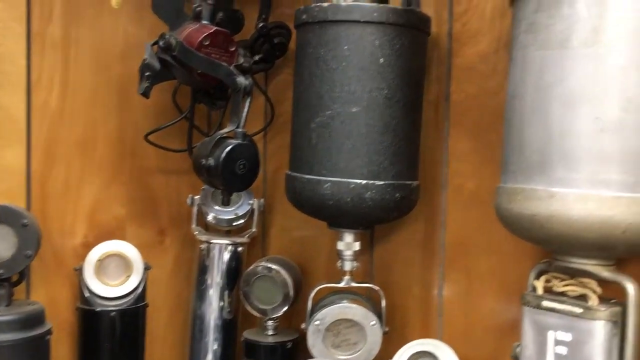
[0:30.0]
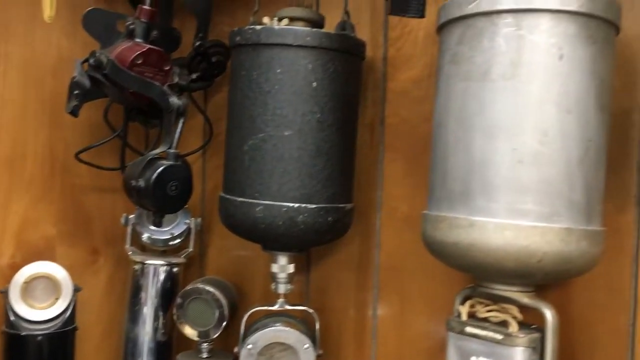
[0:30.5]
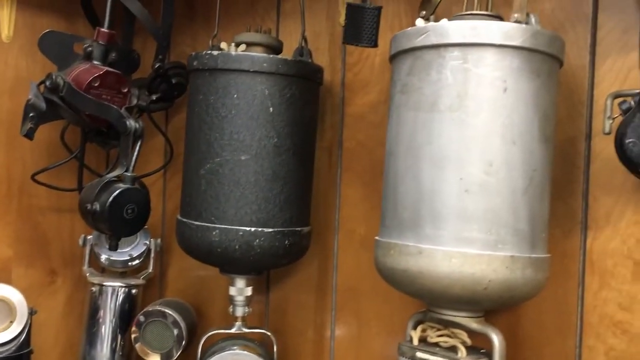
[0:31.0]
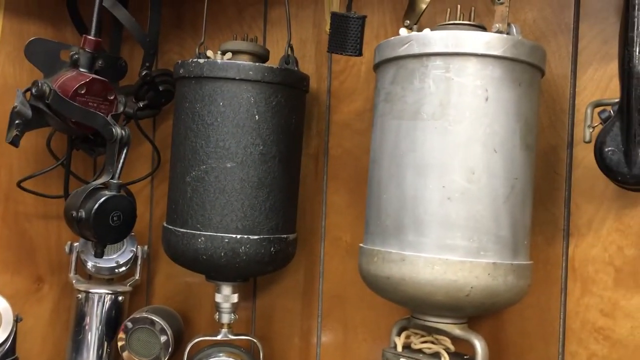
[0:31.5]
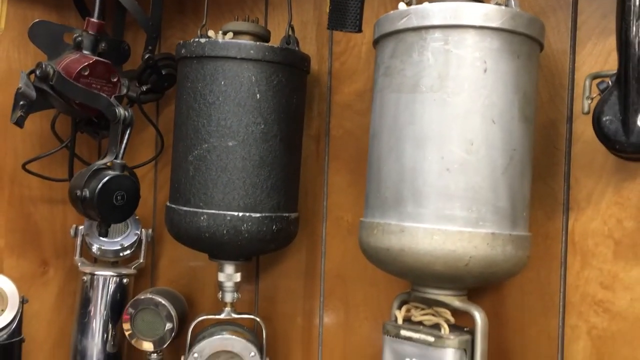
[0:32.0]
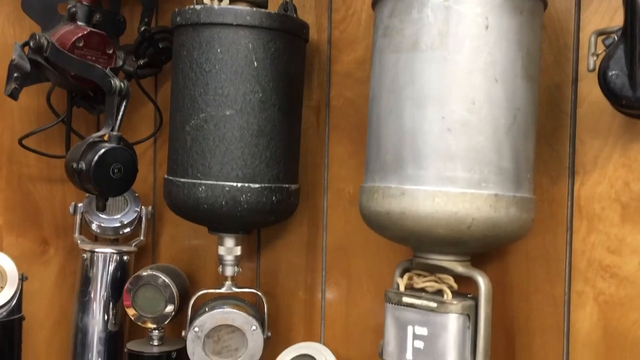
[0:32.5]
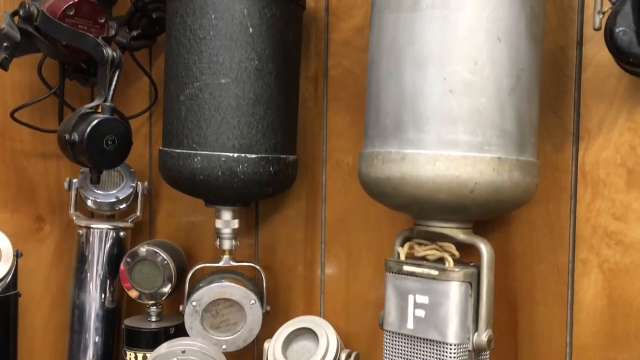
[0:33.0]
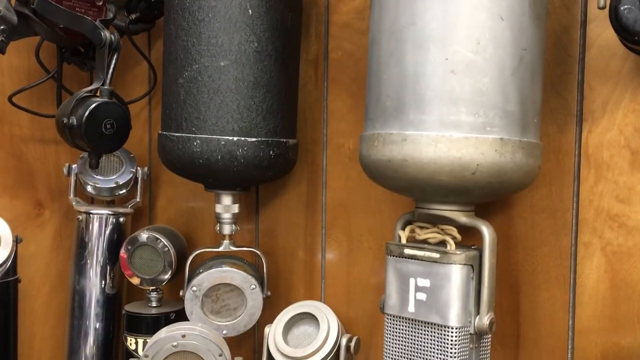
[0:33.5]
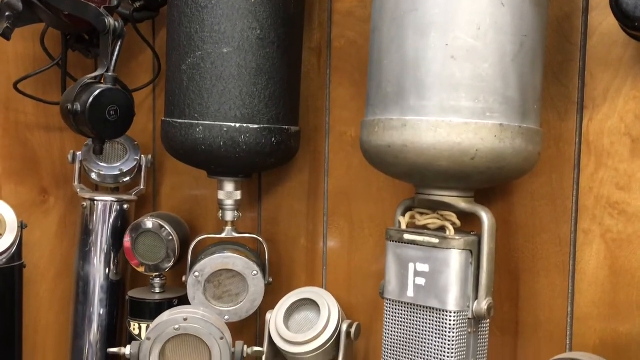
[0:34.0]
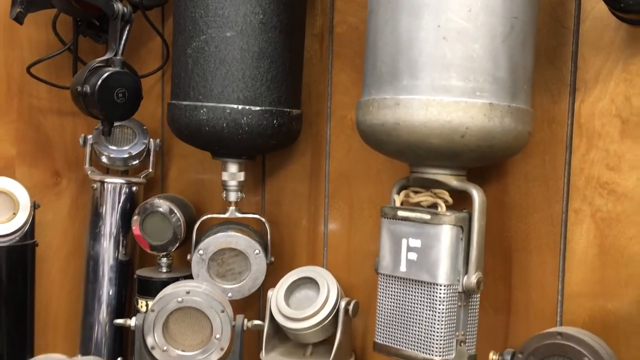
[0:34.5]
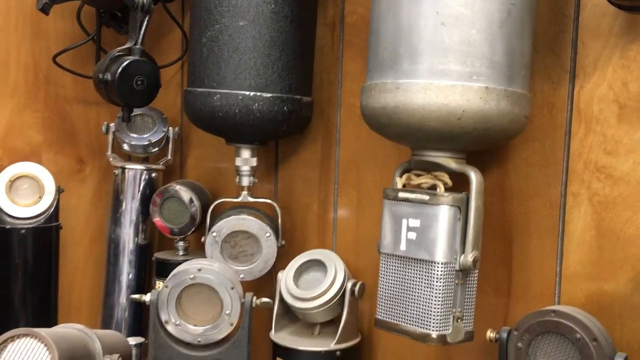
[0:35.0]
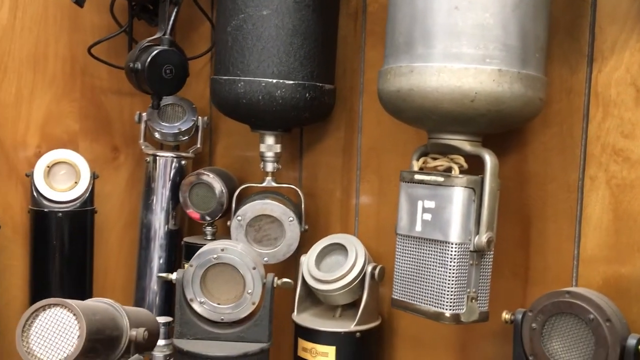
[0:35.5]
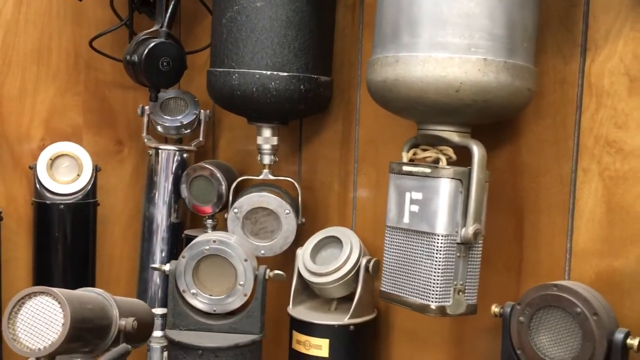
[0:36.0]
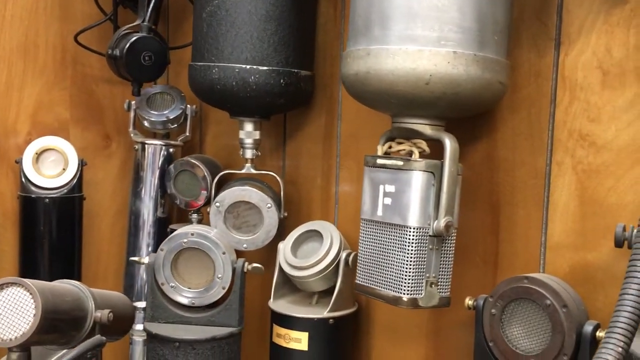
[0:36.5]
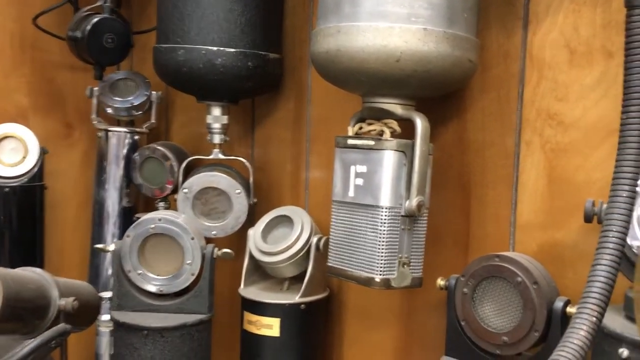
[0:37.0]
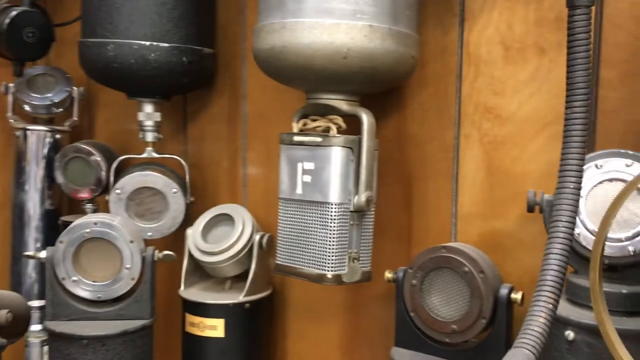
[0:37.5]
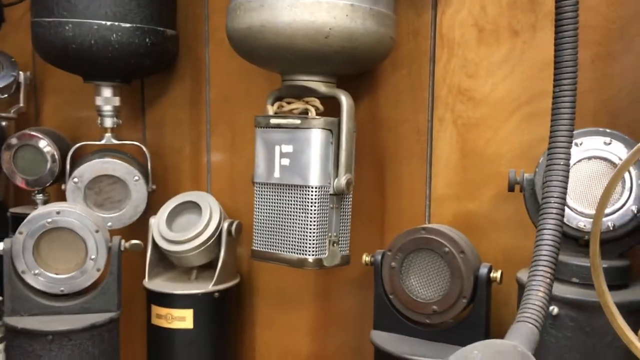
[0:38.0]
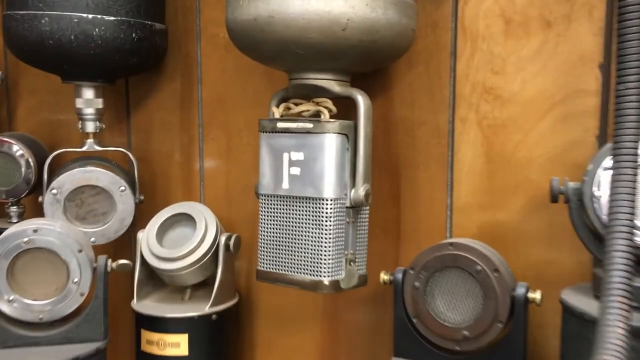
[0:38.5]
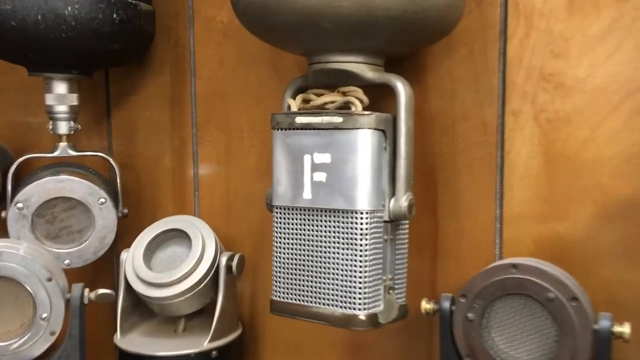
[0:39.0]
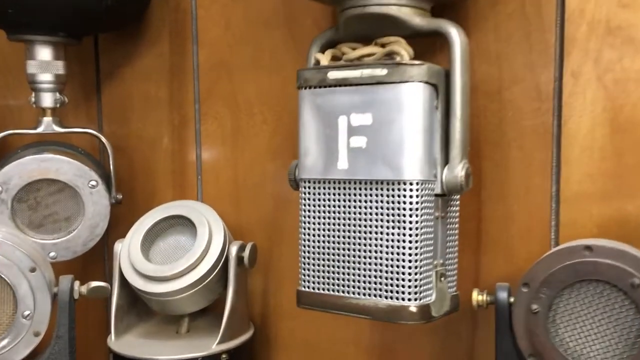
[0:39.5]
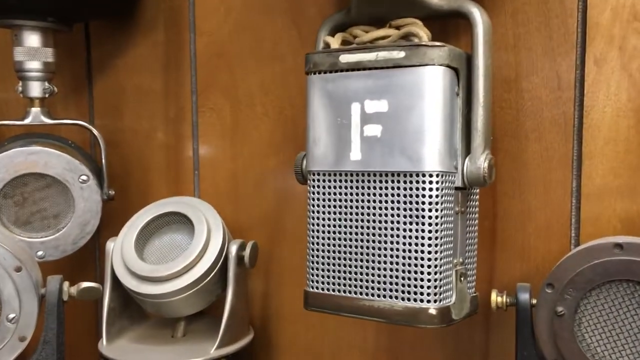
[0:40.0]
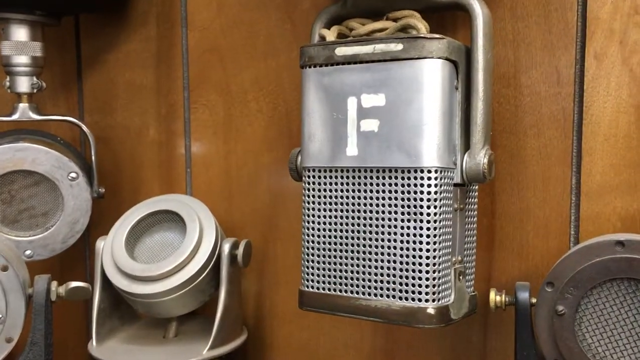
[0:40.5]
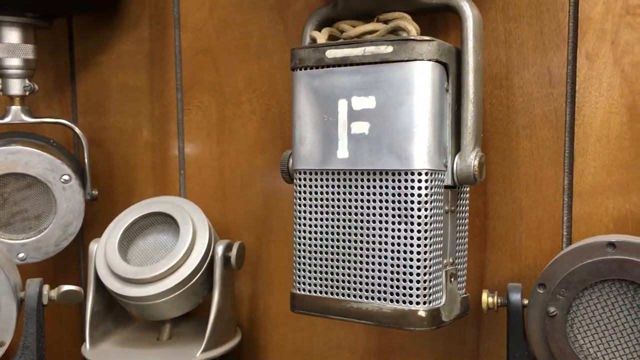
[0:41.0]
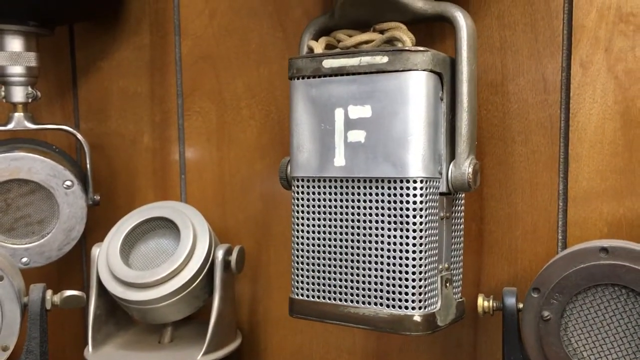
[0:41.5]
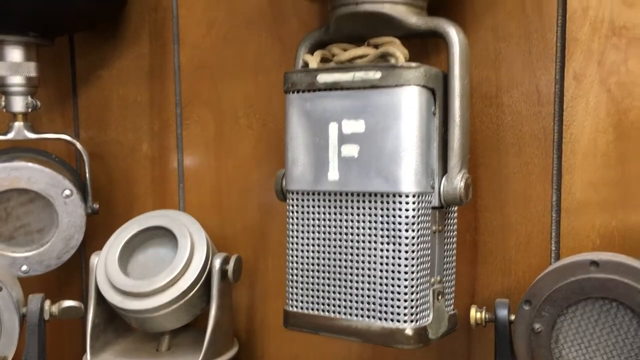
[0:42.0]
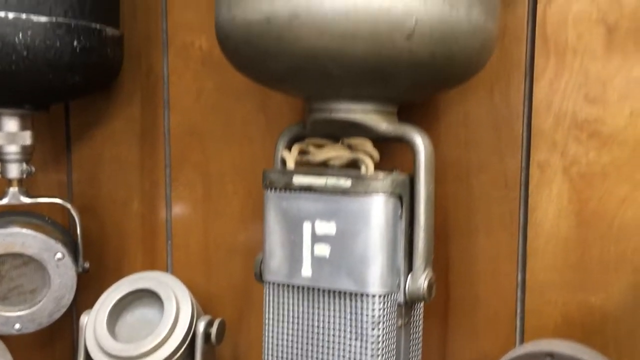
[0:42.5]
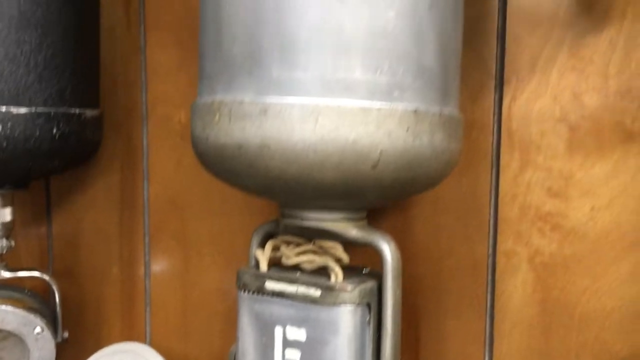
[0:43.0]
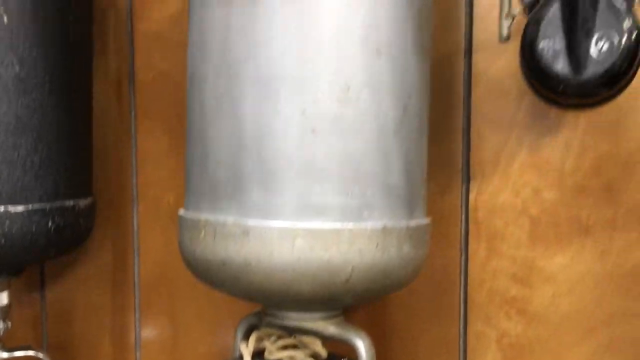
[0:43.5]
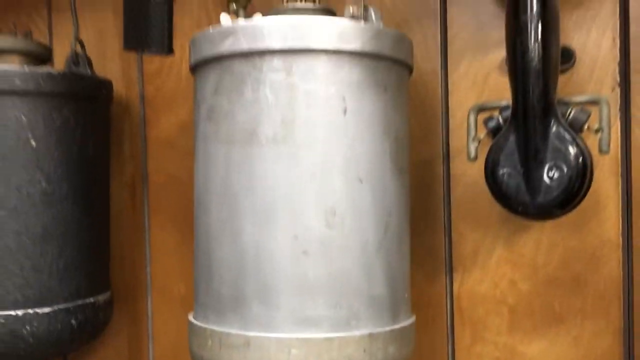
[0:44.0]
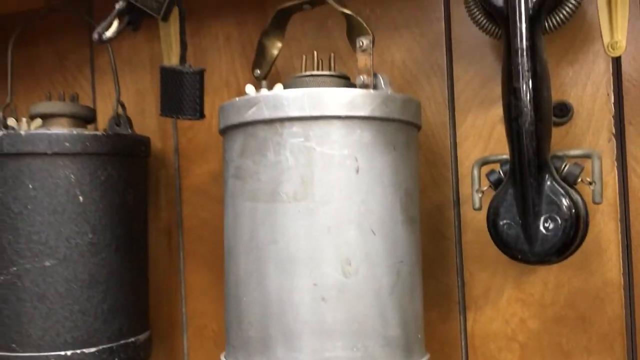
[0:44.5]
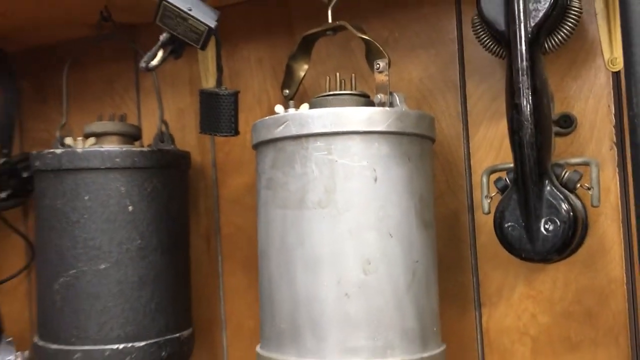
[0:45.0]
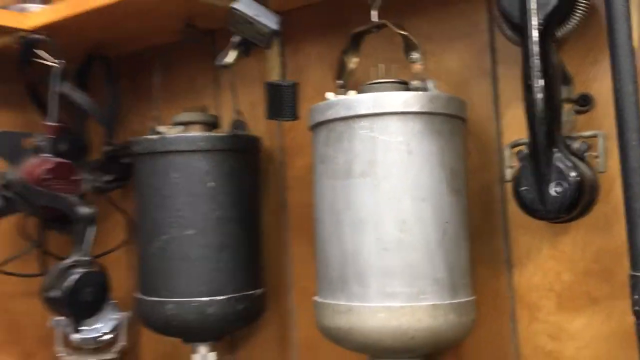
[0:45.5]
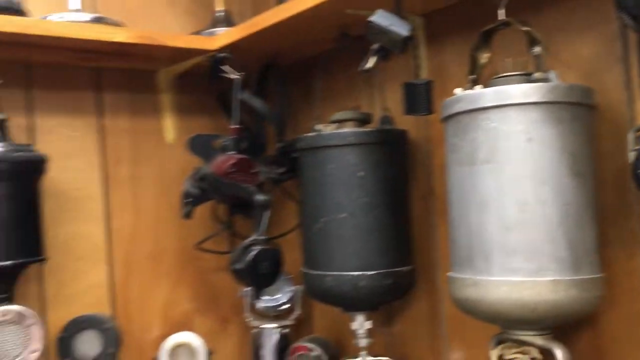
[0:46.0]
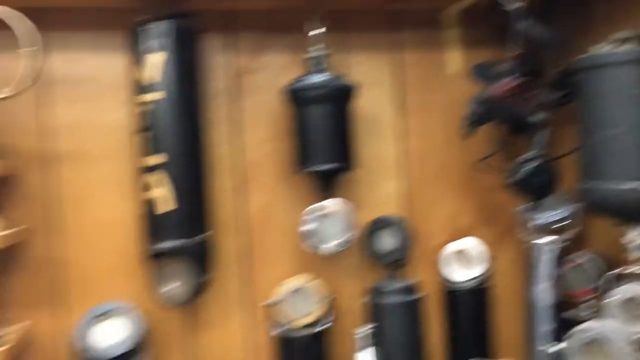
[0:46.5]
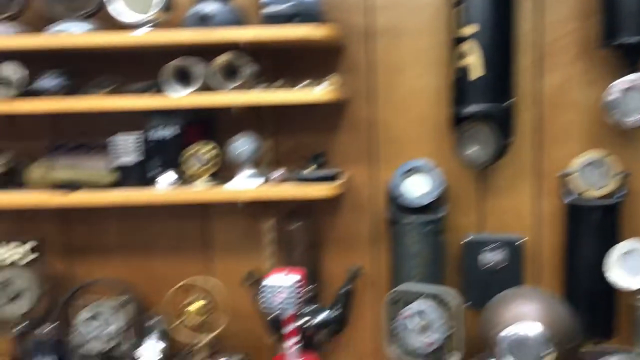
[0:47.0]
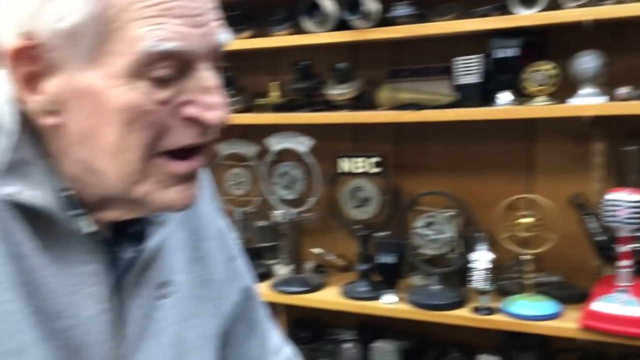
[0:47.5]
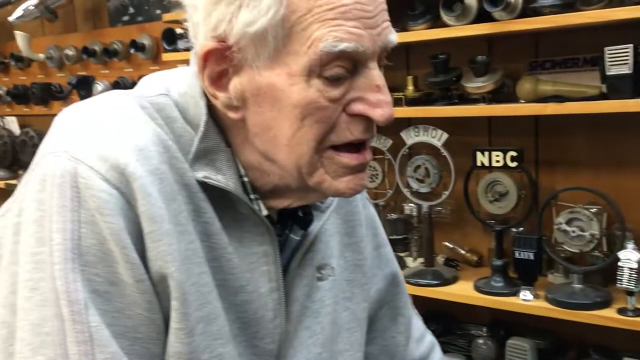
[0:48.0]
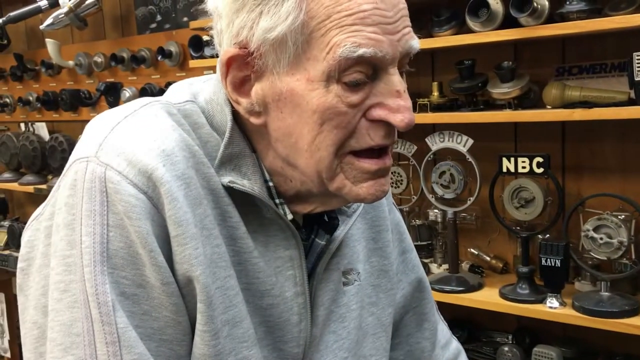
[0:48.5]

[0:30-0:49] Many items with shiny elements hang on a wall in the background; they almost look like old-fashioned microphones and are kind of mounted on canisters. The older gentleman is probably in his 80s or 90s, with completely white hair and lots of wrinkles on his forehead. Among the microphones in the background, one says "NBC" and one says "shot"; the others have no words but are shaped like older, non-current microphone models, almost like antiques. The Caucasian gentleman wears a gray zip-up sweatshirt with a plaid shirt visible underneath.